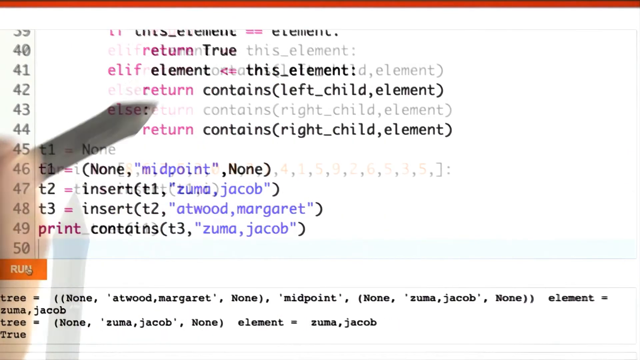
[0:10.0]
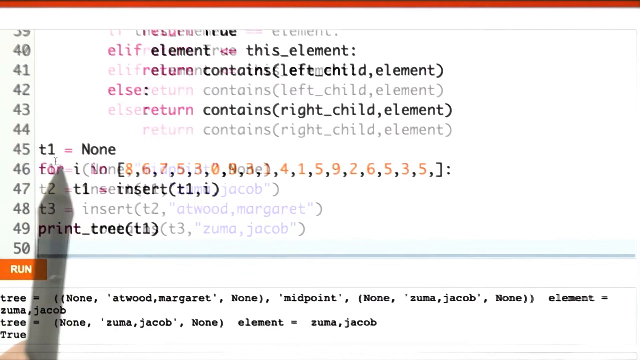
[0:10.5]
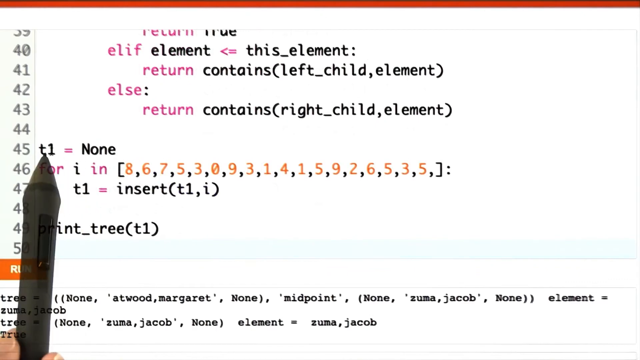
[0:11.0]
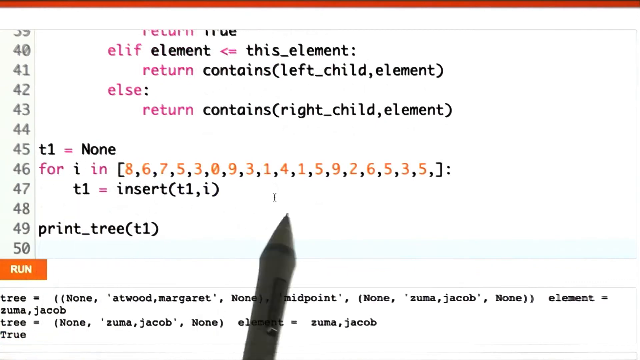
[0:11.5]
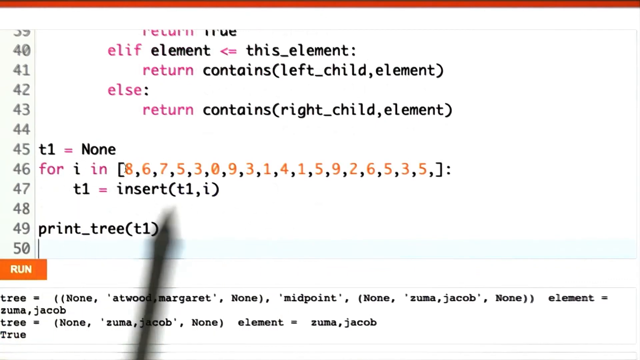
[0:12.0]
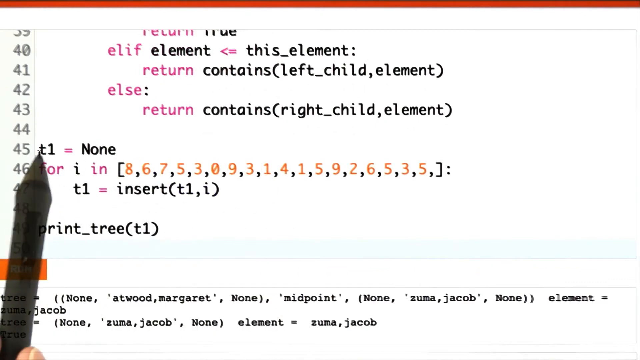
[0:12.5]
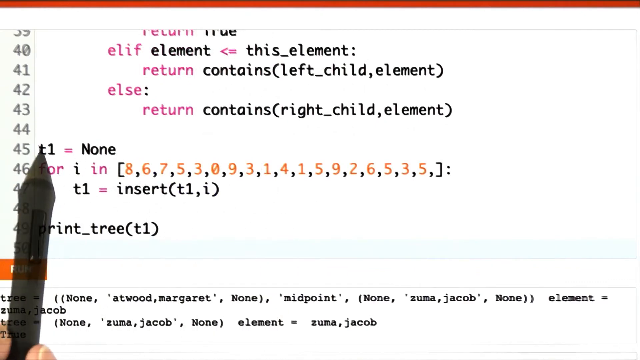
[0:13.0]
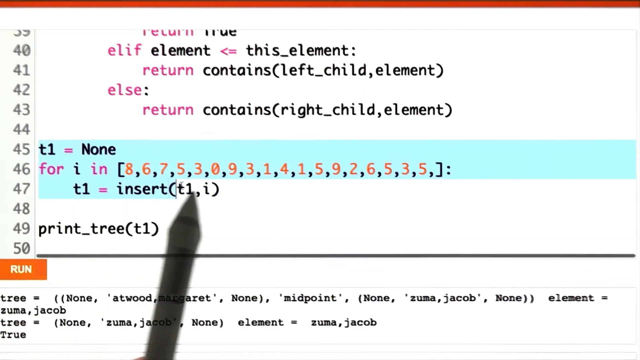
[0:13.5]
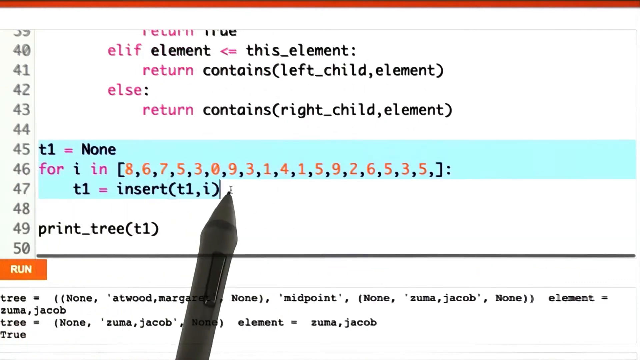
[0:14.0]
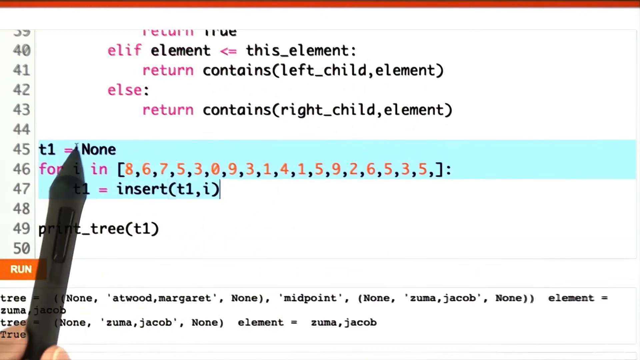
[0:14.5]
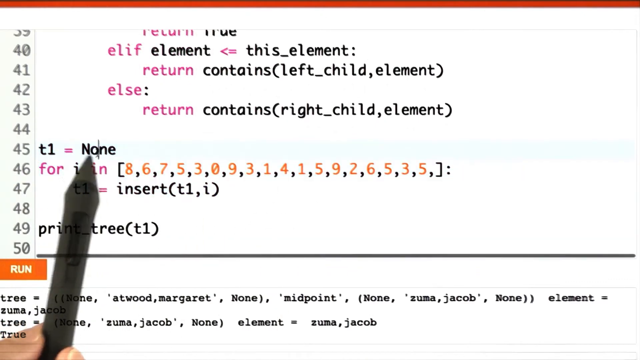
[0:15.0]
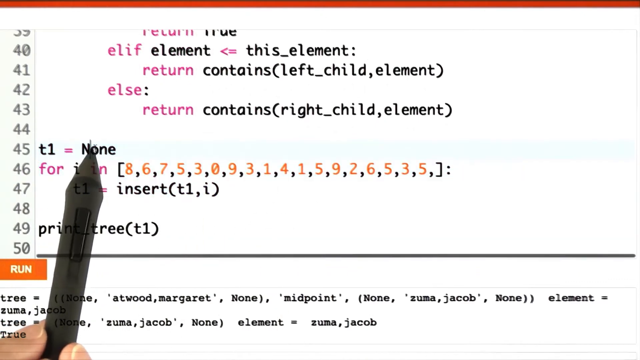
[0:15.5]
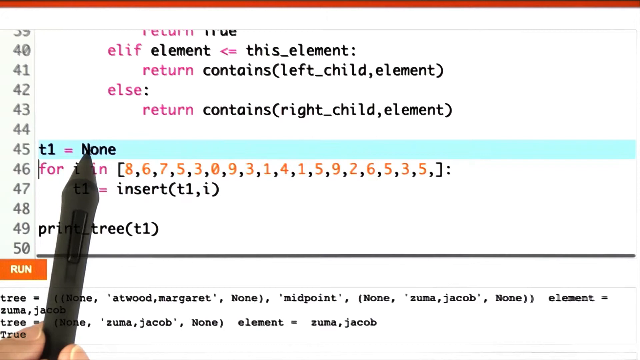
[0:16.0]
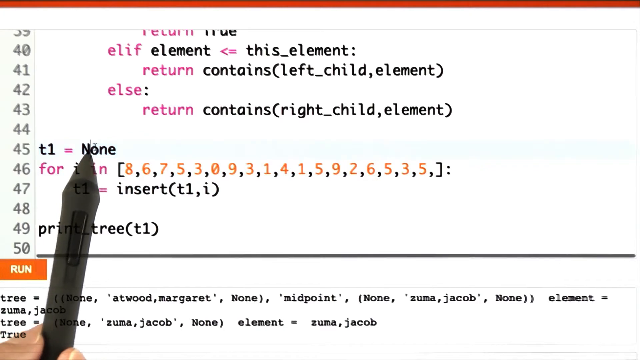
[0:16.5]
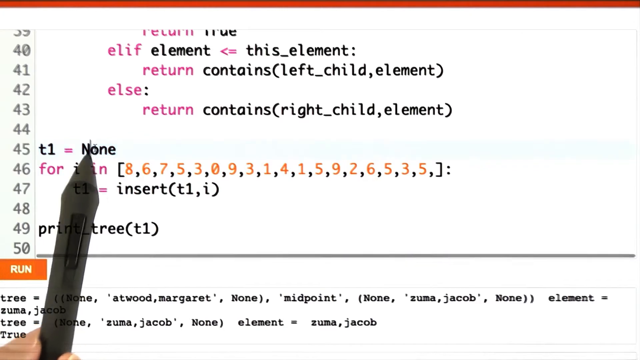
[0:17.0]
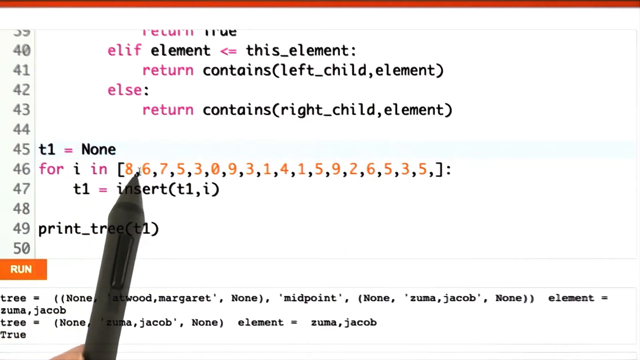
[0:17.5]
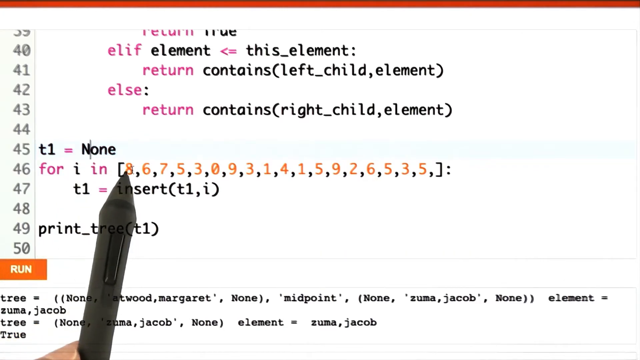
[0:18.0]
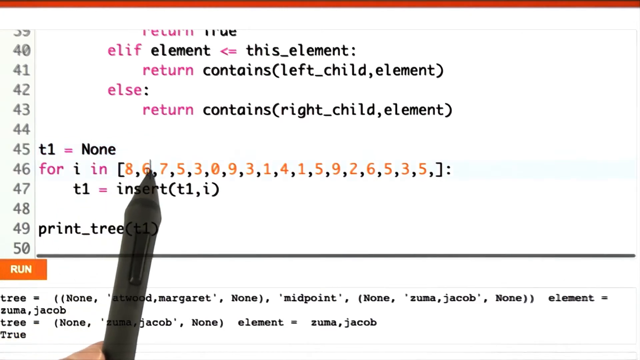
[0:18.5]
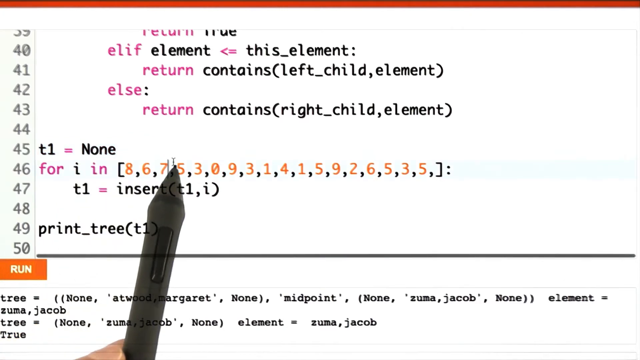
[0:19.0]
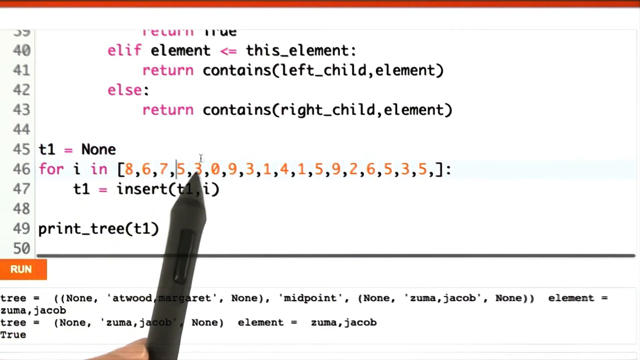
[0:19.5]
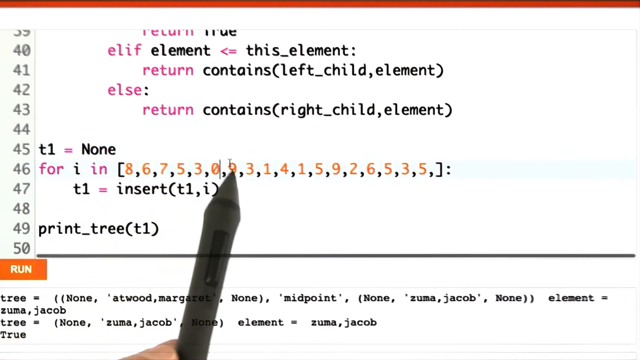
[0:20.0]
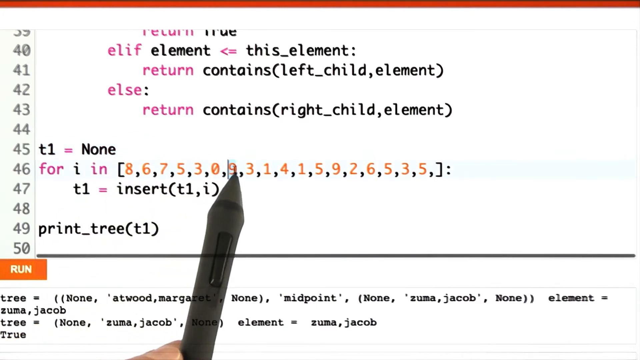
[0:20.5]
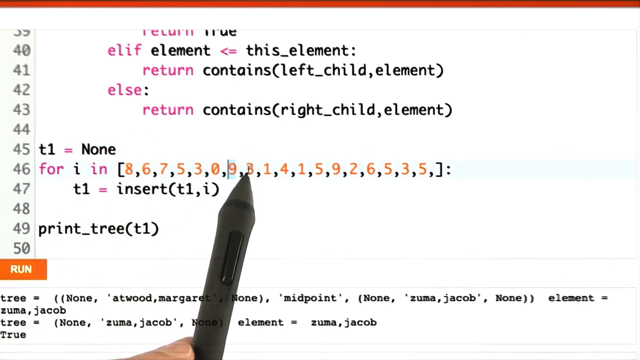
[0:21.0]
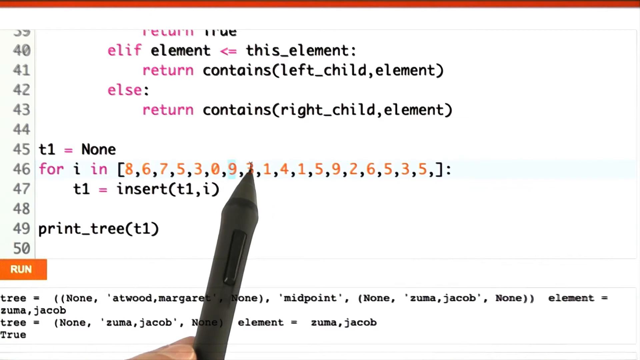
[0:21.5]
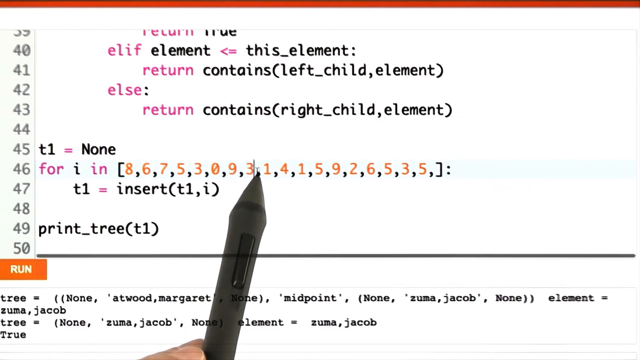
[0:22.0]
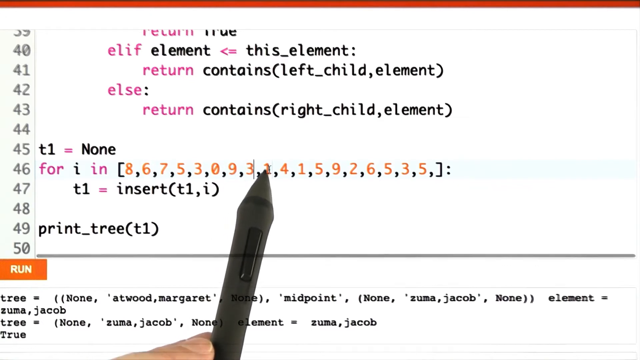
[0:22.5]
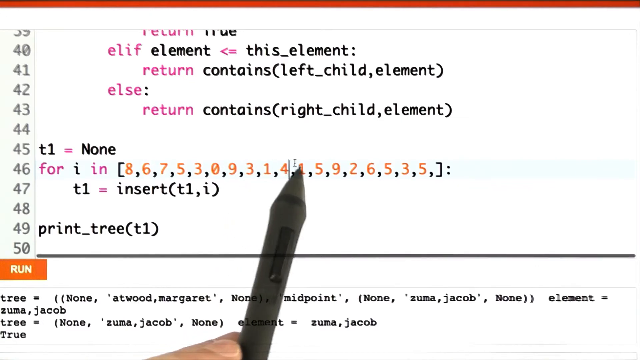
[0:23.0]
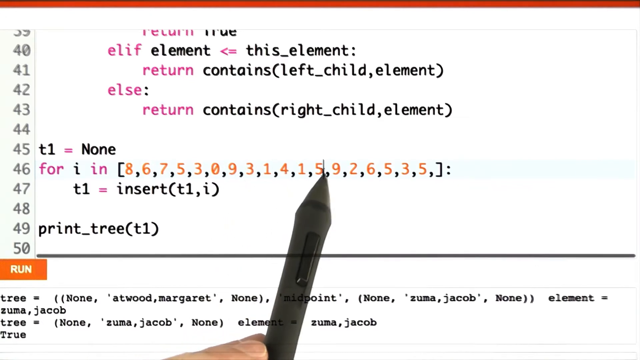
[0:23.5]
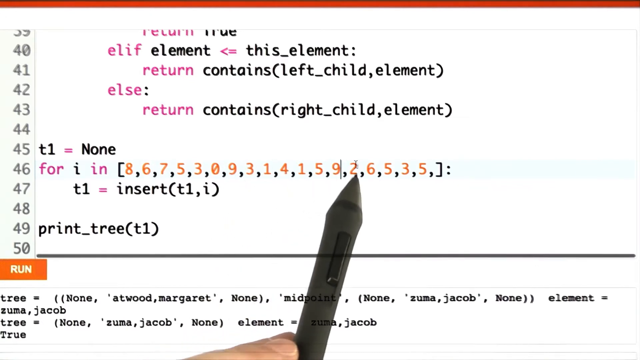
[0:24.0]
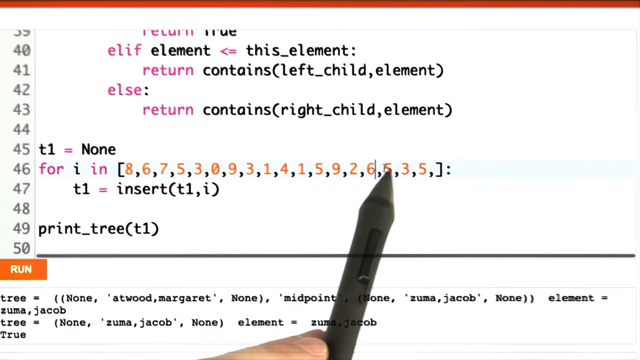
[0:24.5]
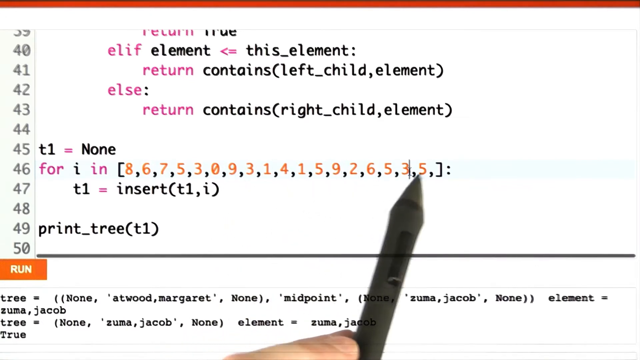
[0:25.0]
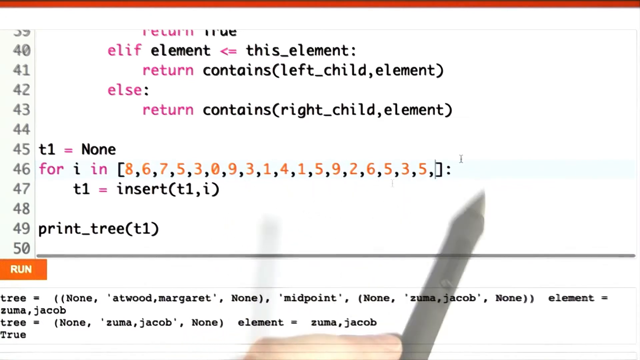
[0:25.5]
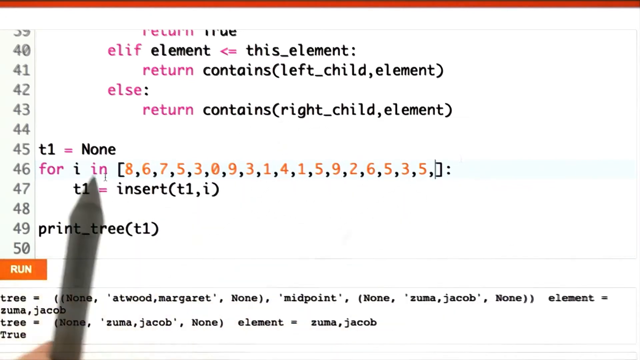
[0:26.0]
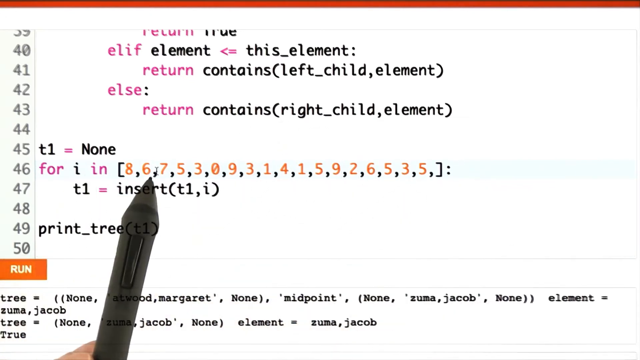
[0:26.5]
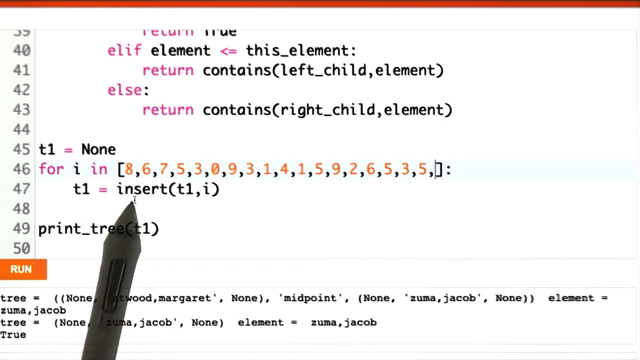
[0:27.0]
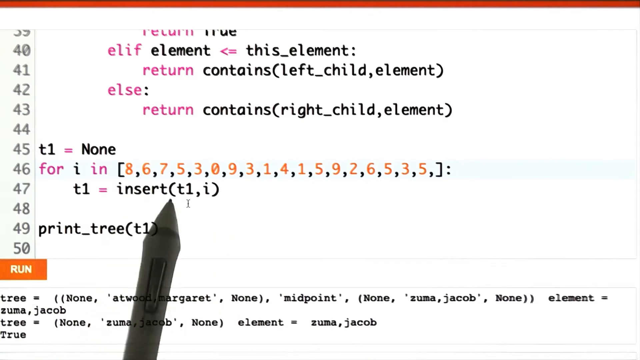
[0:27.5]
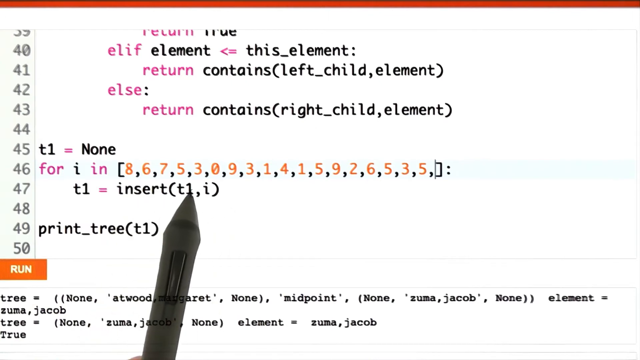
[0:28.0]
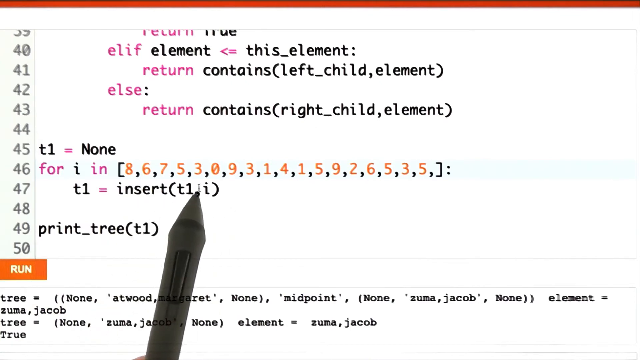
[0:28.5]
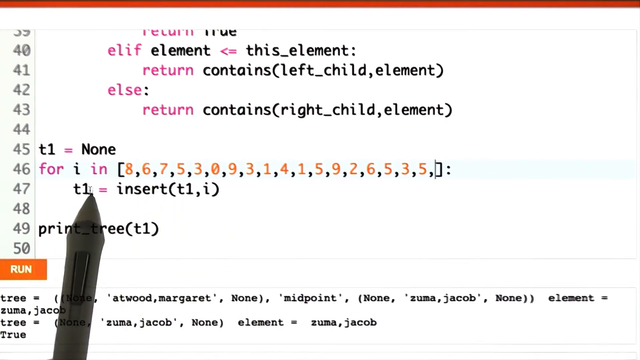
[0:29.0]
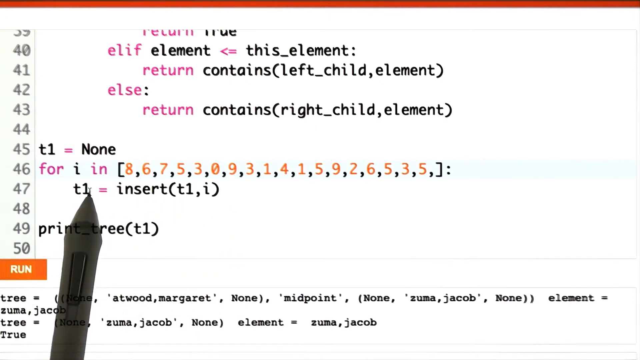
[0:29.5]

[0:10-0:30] The program source code shows how to use the function written above it, apparently to make a tree. T1 is set equal to none, then a for loop contains a set of numbers that are inserted into the T1 tree structure. T1 is then passed into a print tree function, which is meant to show the relationships of all the numbers in T1. A black pen points to different sections of the tree numbers, moving along them one by one, and also highlights the block of source code. The numbers are the input data fed into the function, whose algorithm is not yet shown; it possibly uses some binary-based logic.